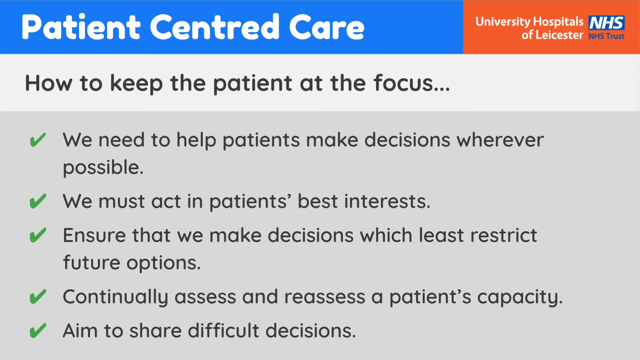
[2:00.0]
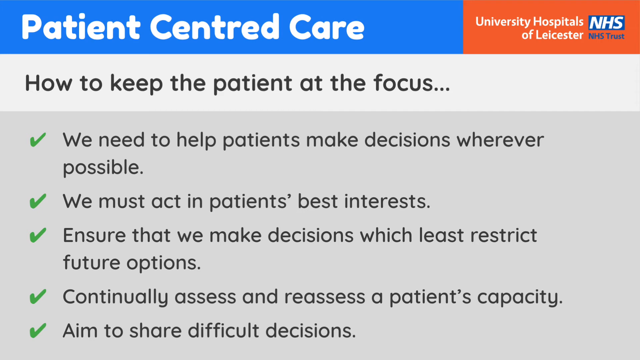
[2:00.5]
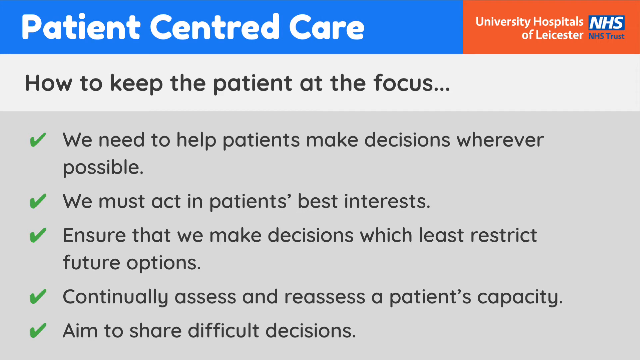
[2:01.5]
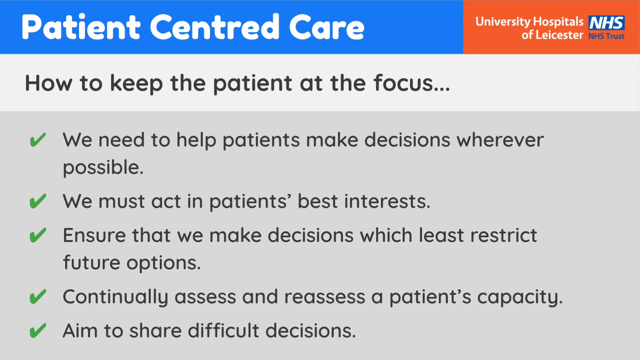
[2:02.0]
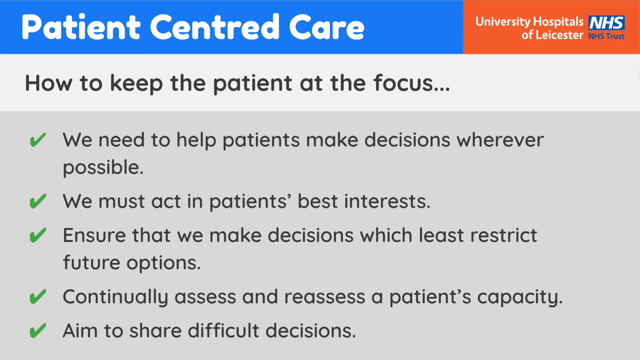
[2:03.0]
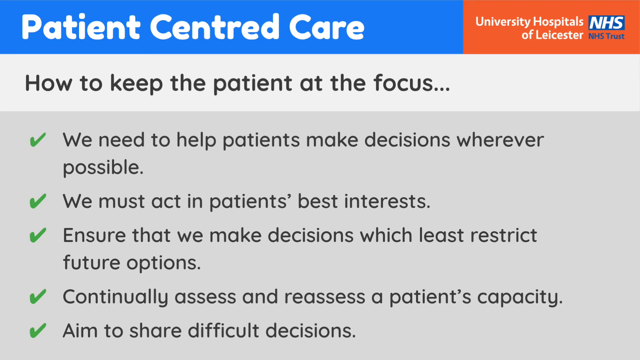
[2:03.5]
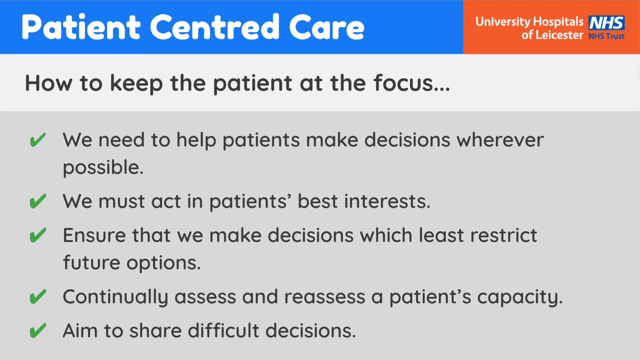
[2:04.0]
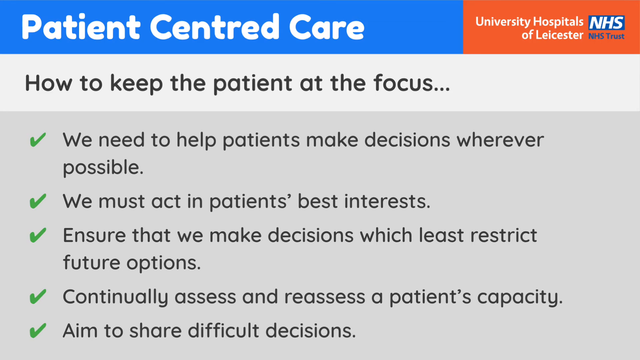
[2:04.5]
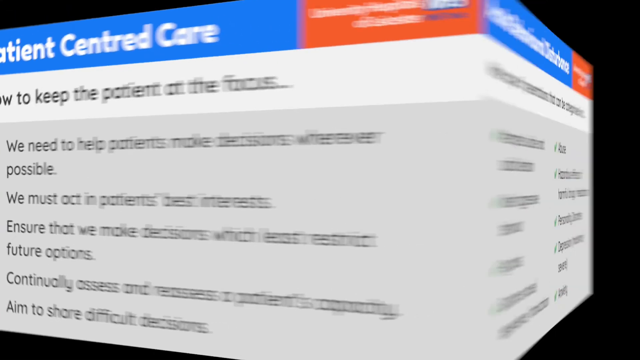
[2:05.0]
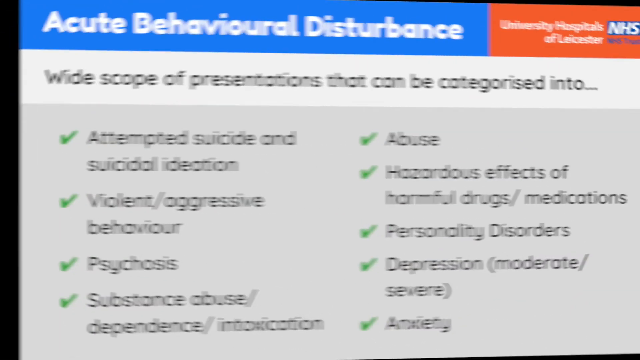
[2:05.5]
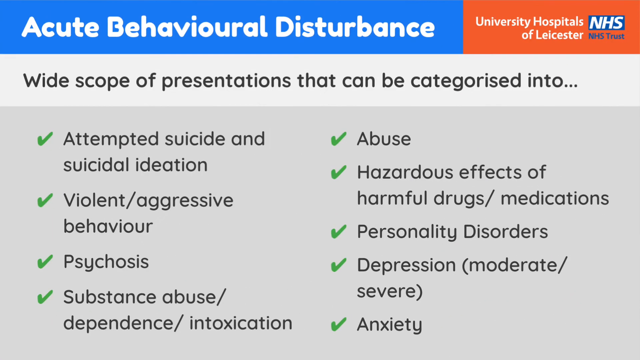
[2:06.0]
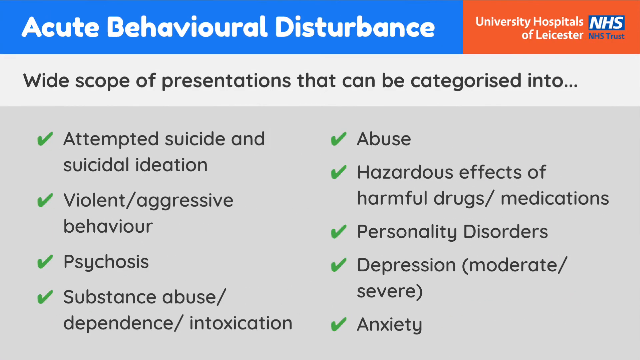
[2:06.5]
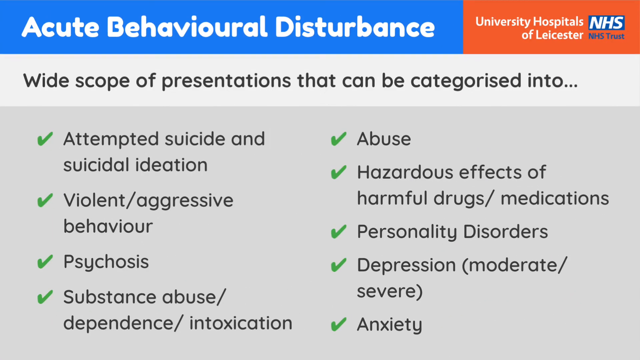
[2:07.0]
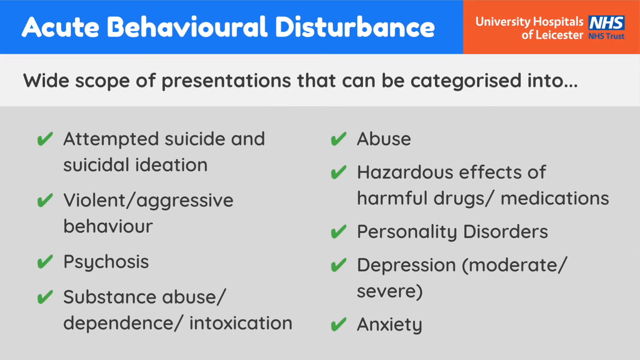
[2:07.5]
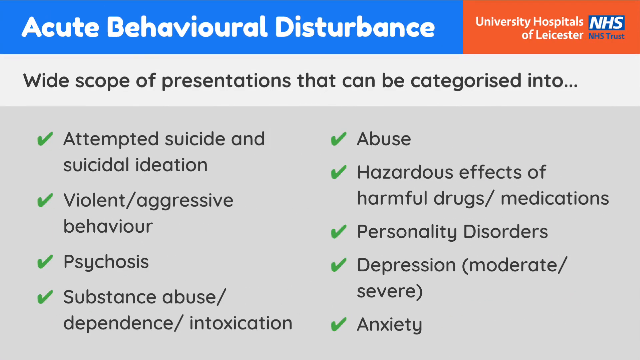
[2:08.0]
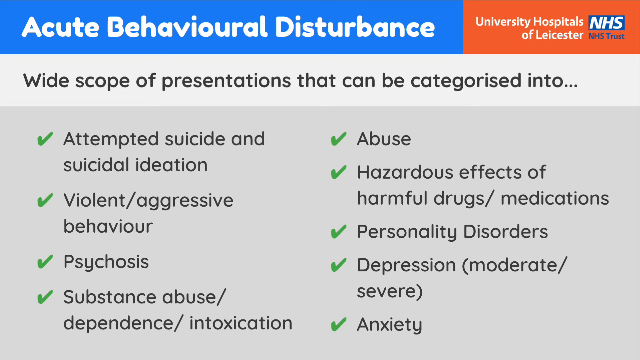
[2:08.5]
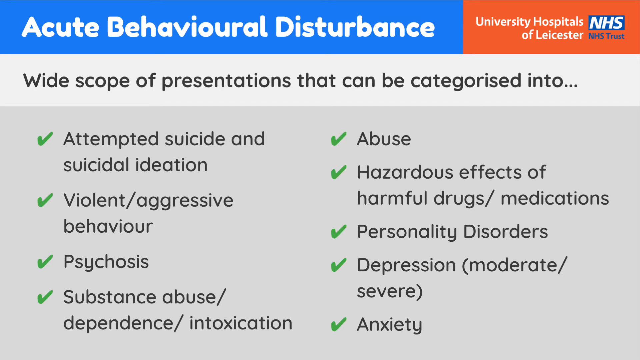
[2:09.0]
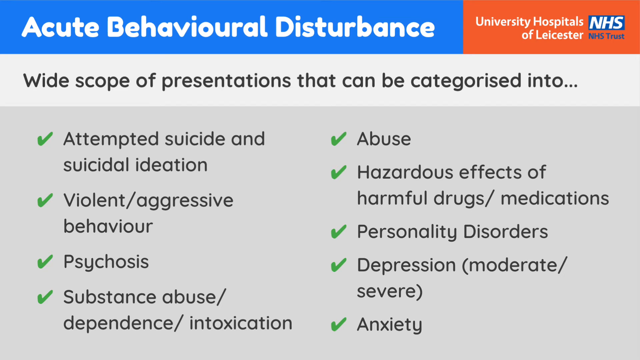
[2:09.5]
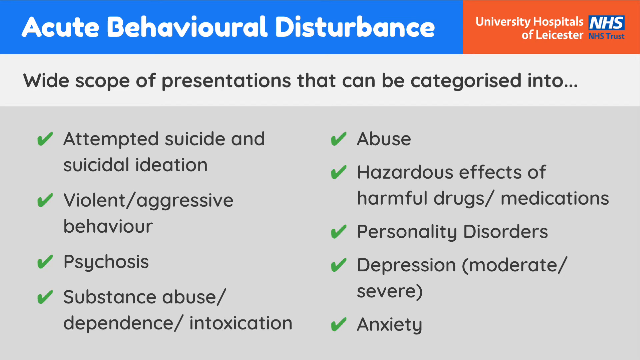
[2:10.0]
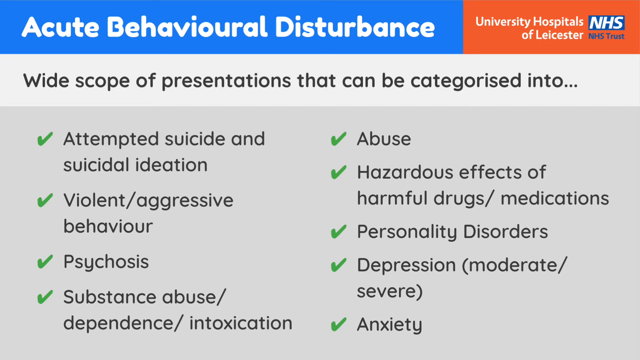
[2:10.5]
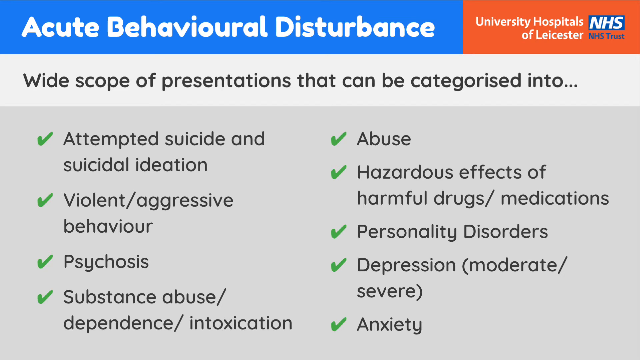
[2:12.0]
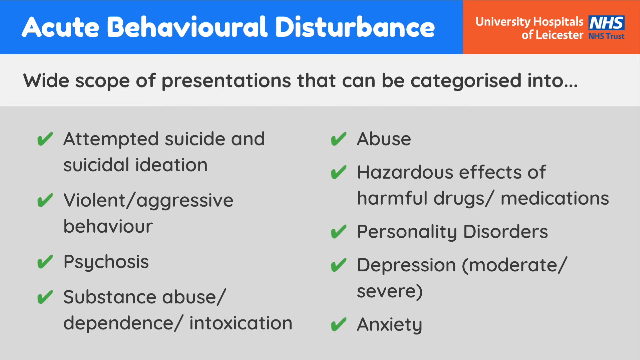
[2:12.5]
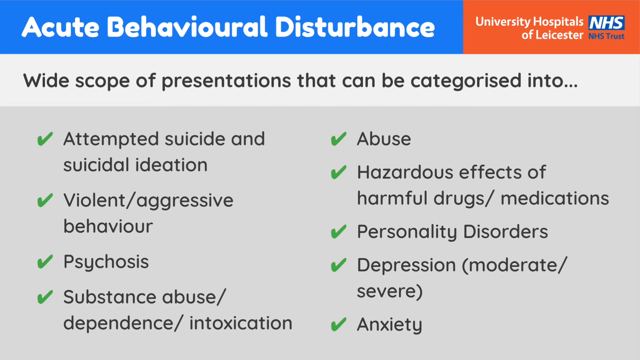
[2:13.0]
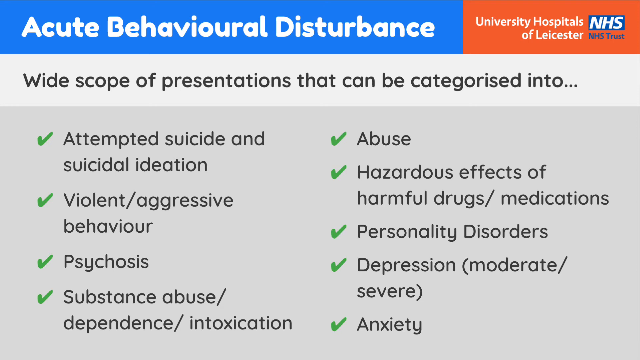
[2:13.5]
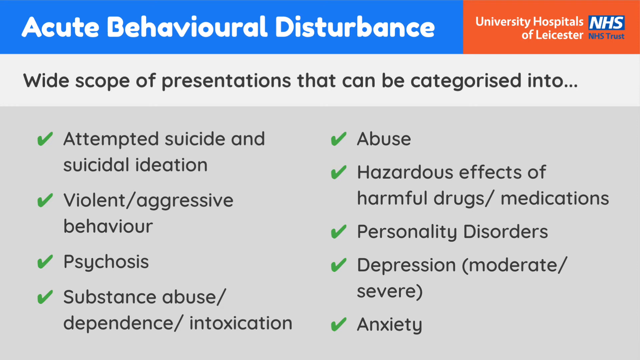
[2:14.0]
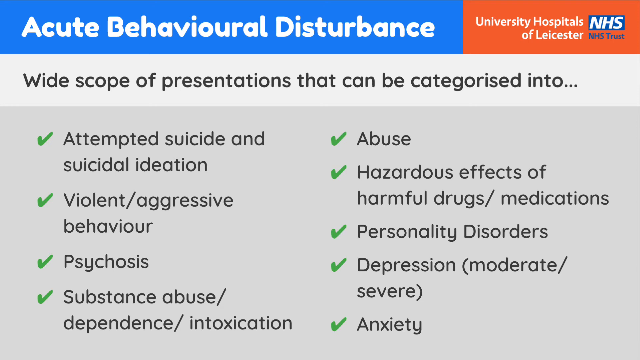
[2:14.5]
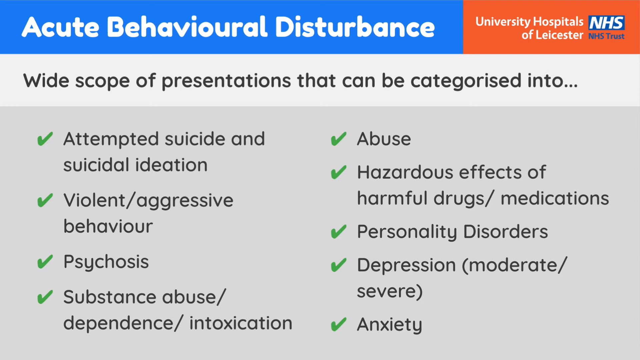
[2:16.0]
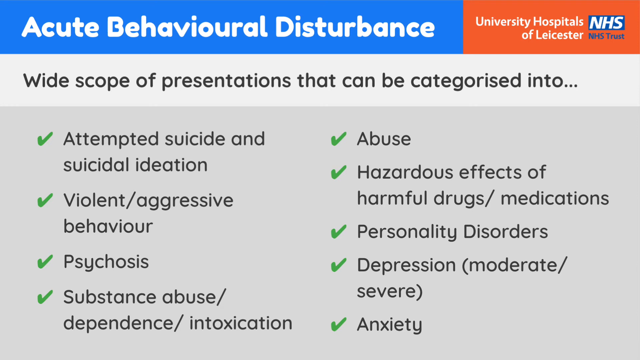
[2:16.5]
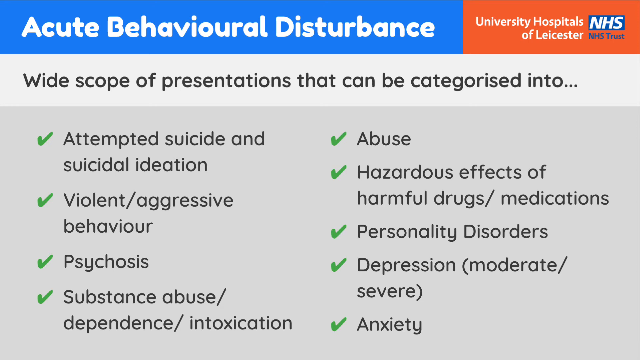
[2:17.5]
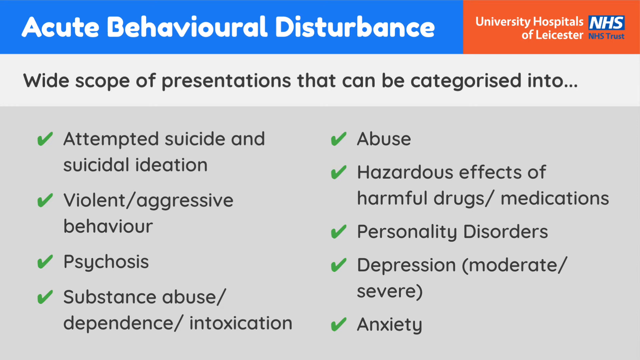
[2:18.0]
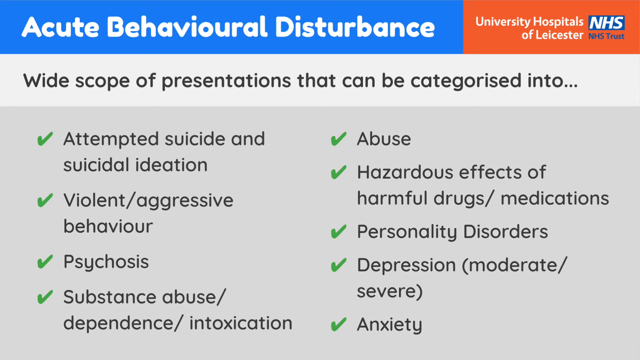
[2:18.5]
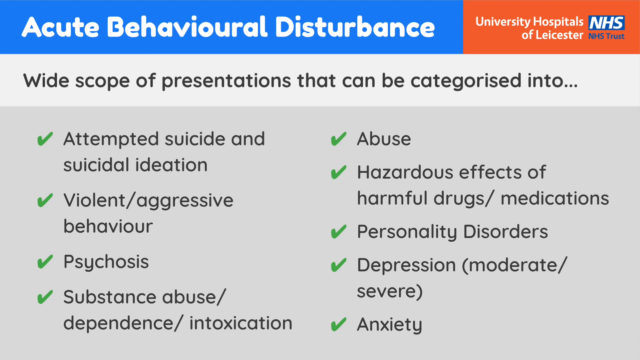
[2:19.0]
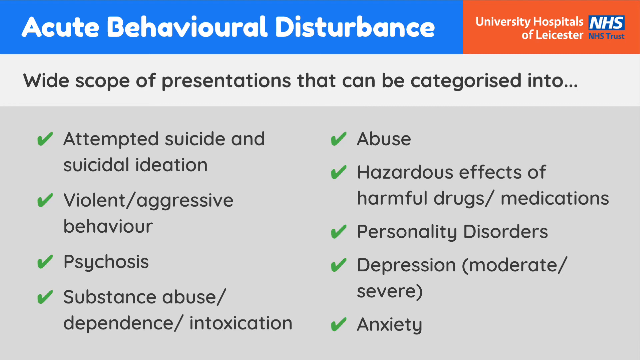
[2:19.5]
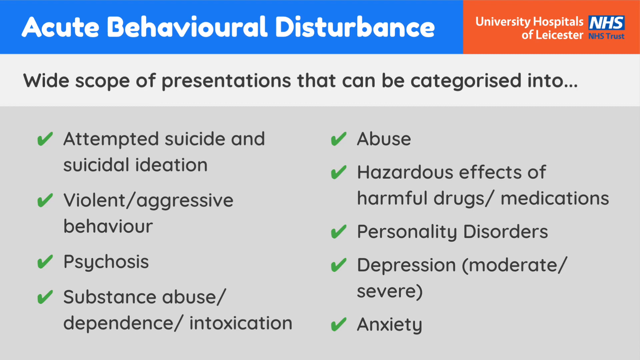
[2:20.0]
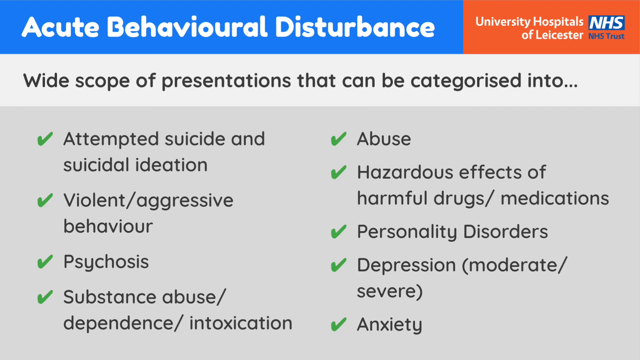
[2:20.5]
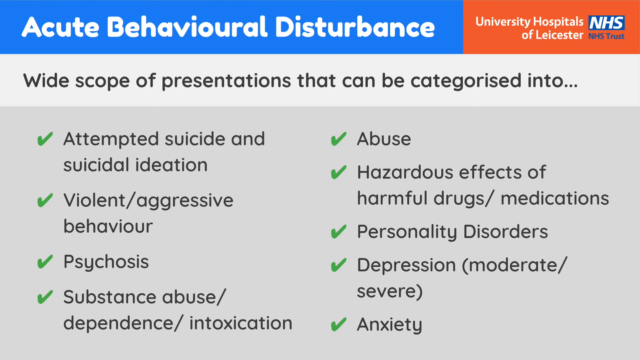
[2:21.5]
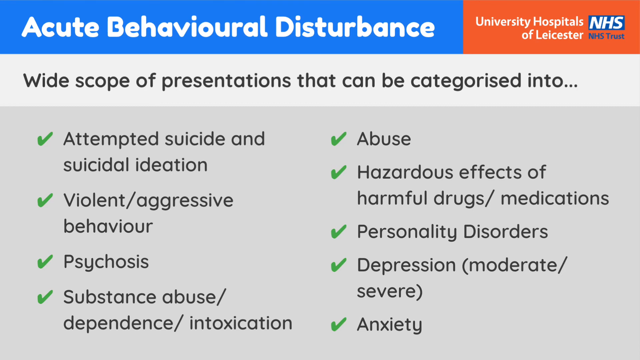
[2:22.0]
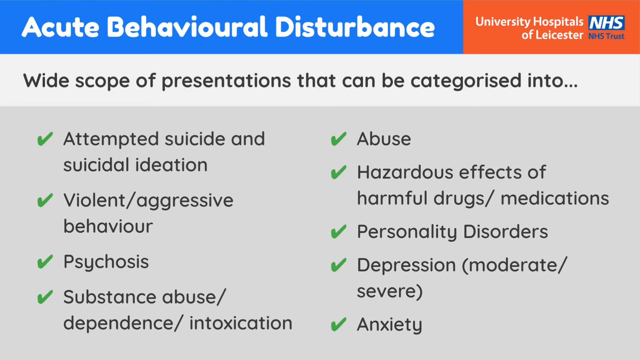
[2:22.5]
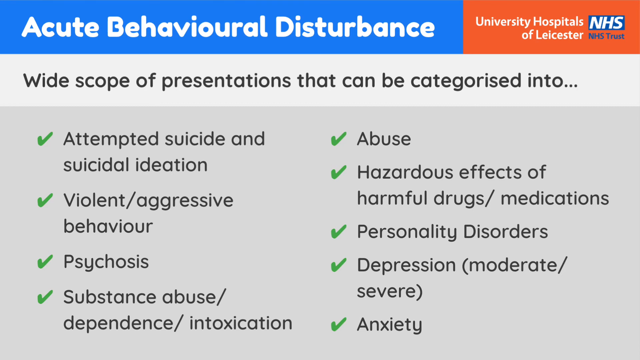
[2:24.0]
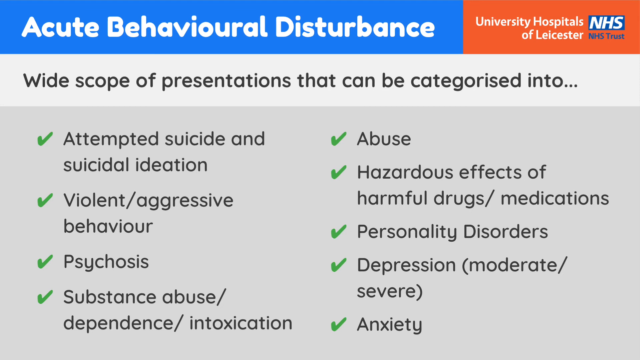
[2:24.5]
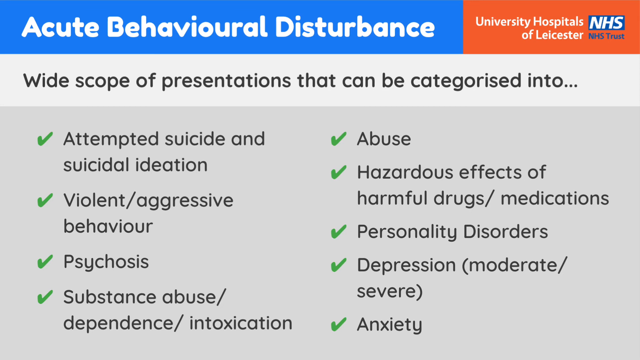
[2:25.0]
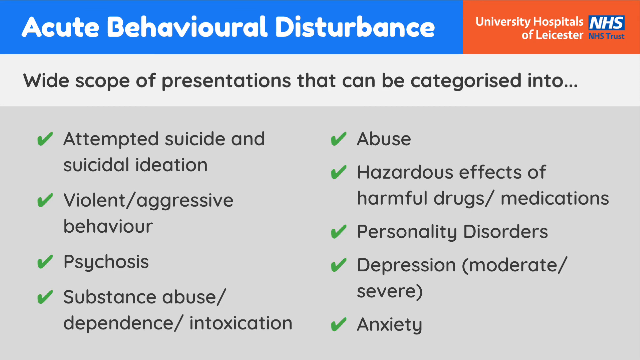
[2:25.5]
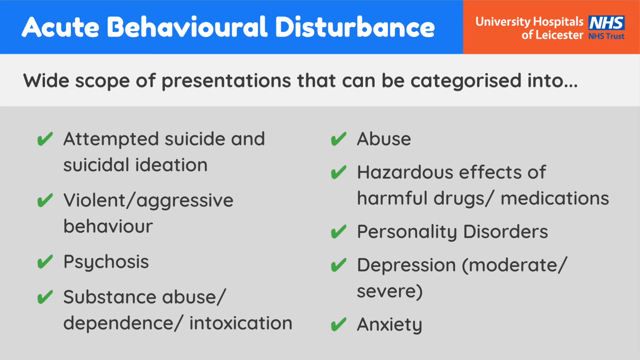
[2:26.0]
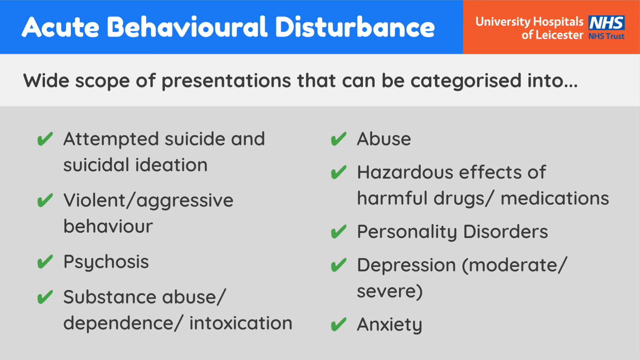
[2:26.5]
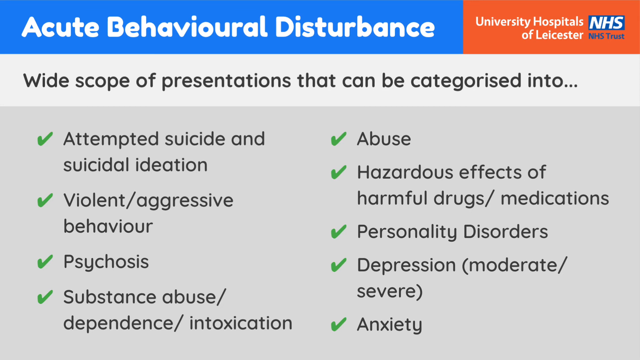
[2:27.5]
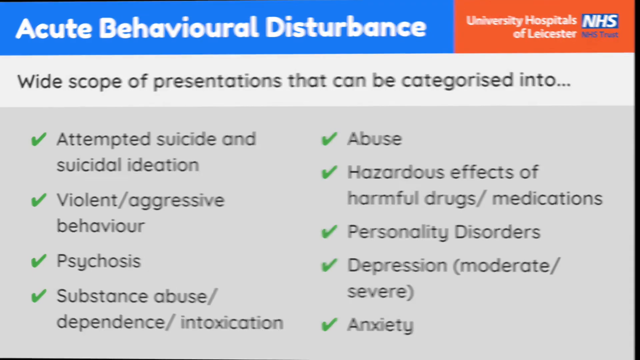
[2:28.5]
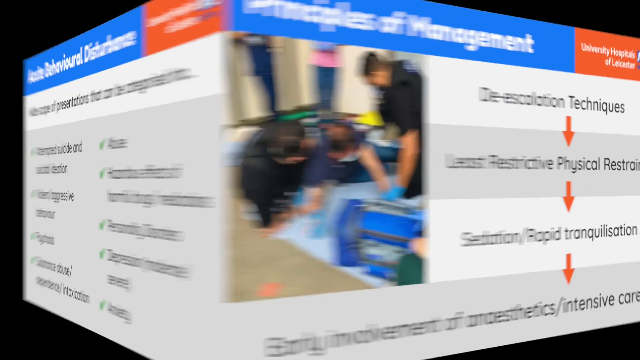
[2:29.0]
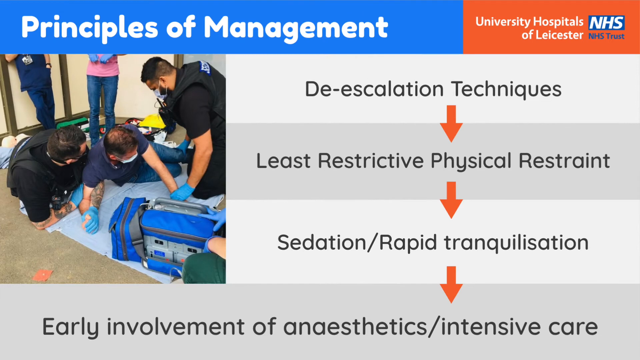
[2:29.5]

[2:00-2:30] Pages of a training for staff members on dealing with crisis patients appear one after another. One page, headed "acute behavioral disturbance" in white in a blue box at the very top of the screen, reads "a wide scope of presentations can be categorized into" and lists the categories, each with a green check mark on its left side, in a shaded gray area that differentiates them from the heading. The pages swing around and show what participants in the course will be learning, and the principles of management appear very quickly. The page then goes back to patient-centered care, how to keep the patient at the focus, which lists five items with green check marks to the left of each.